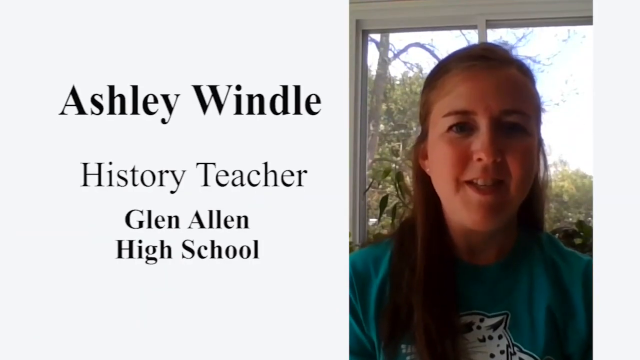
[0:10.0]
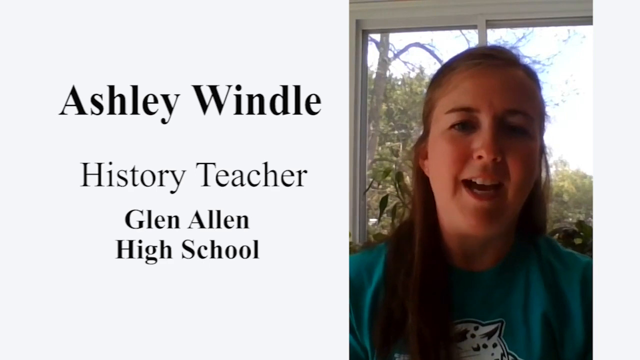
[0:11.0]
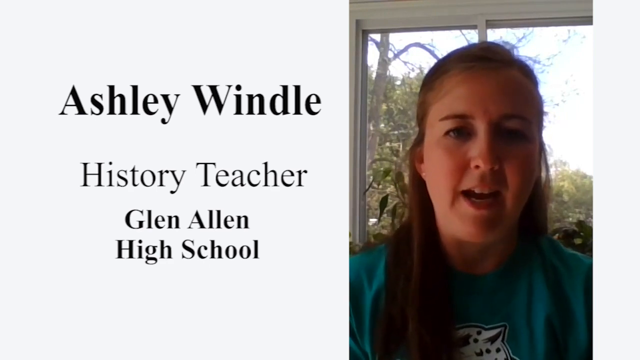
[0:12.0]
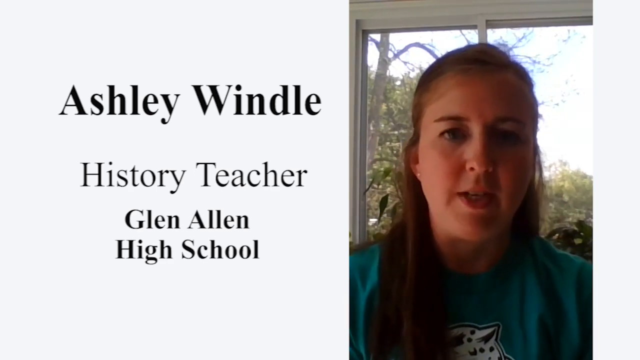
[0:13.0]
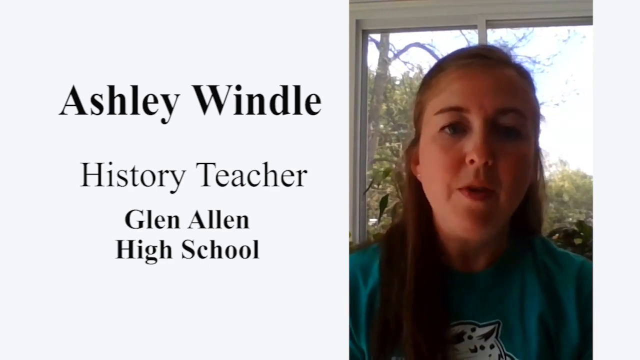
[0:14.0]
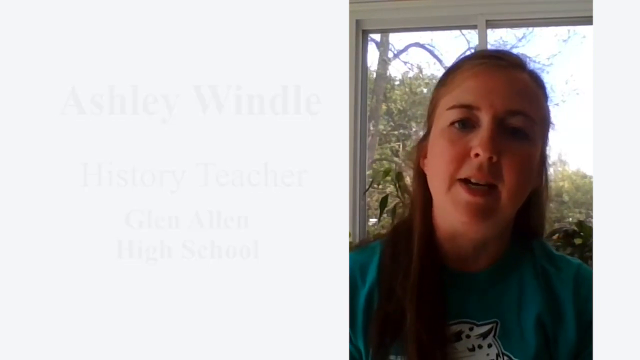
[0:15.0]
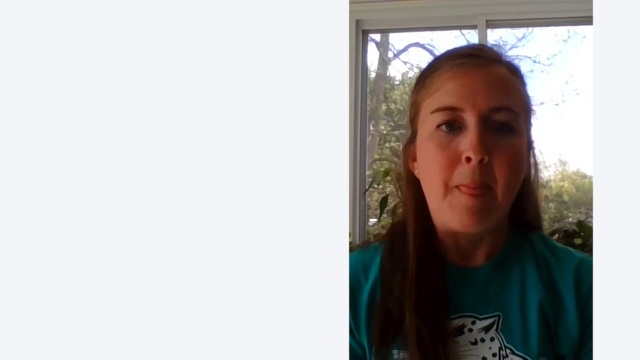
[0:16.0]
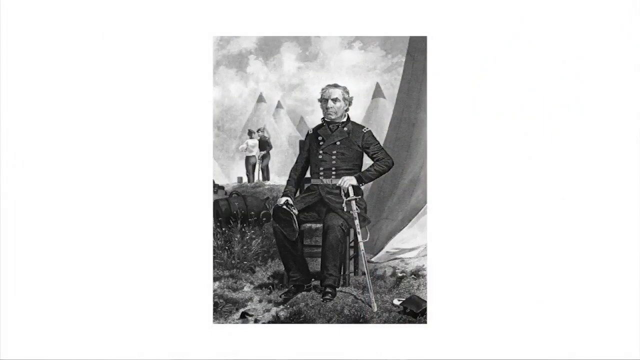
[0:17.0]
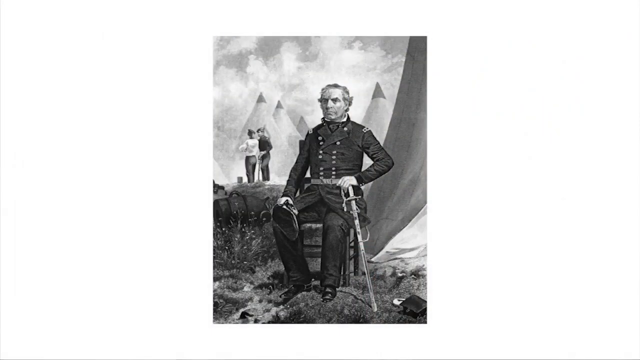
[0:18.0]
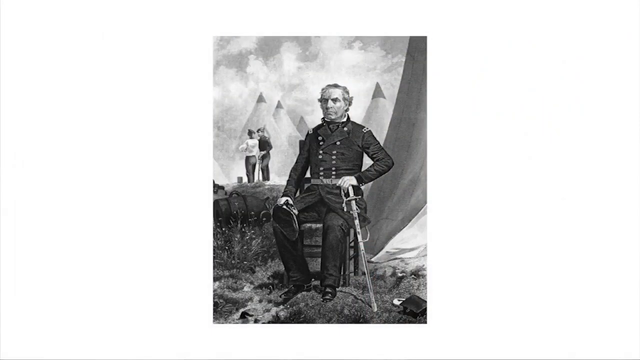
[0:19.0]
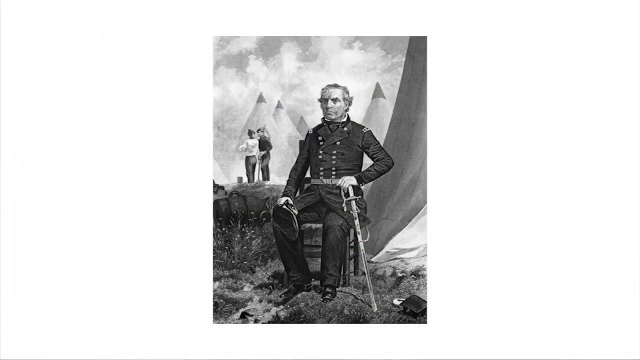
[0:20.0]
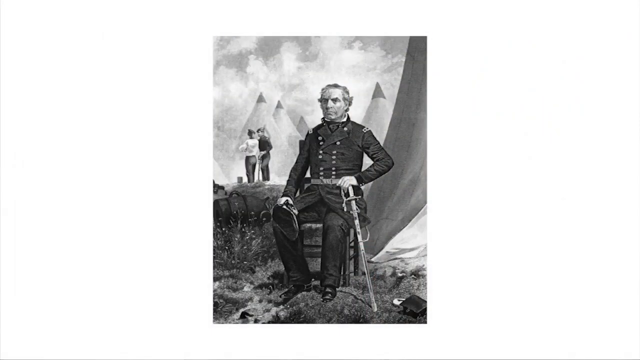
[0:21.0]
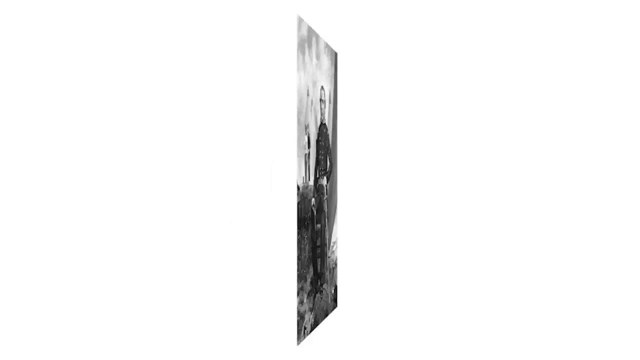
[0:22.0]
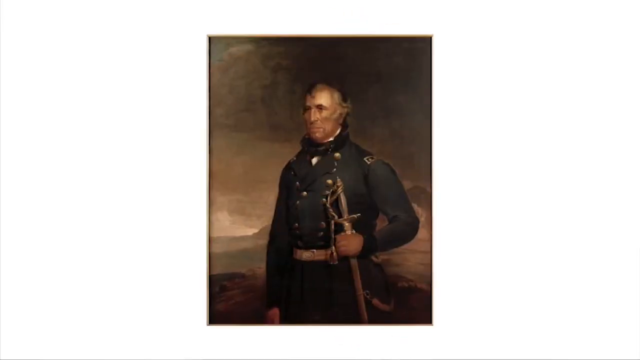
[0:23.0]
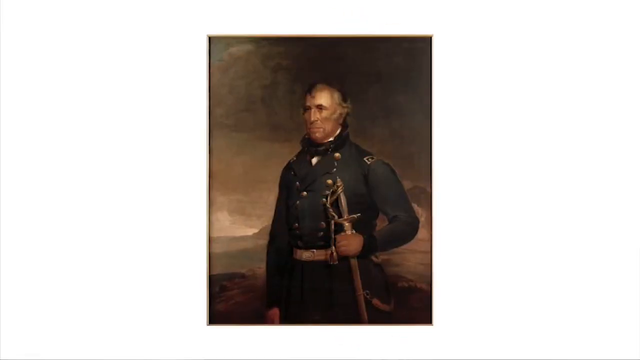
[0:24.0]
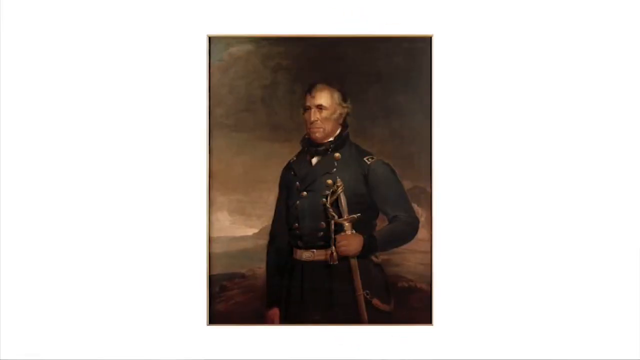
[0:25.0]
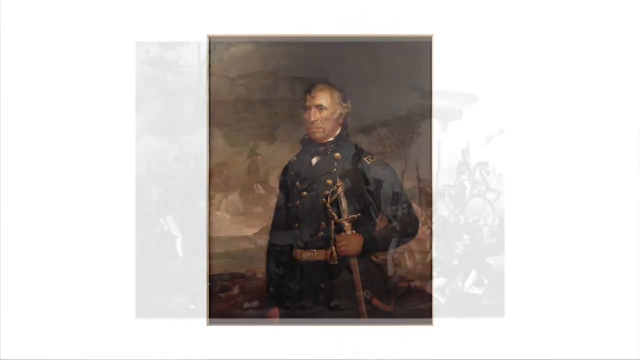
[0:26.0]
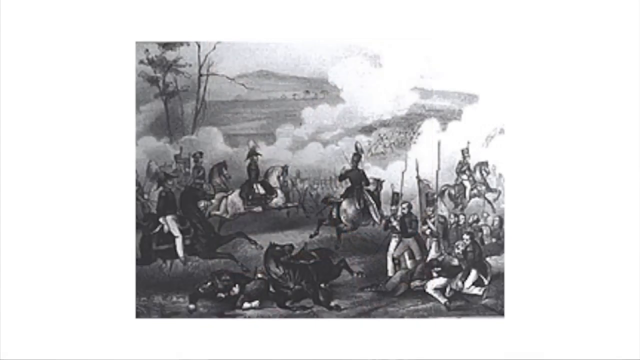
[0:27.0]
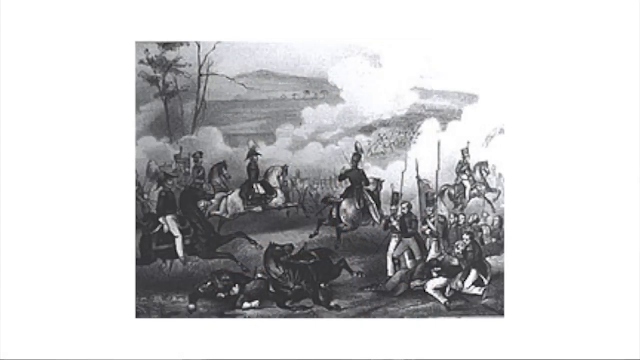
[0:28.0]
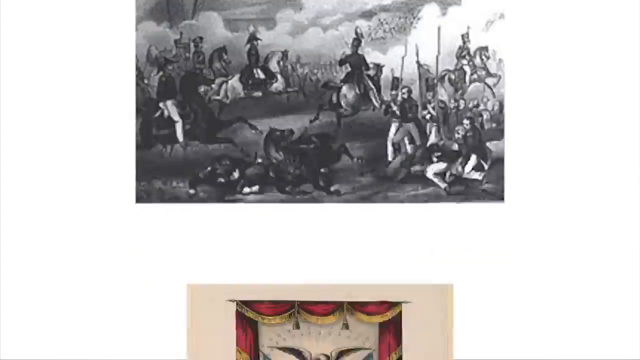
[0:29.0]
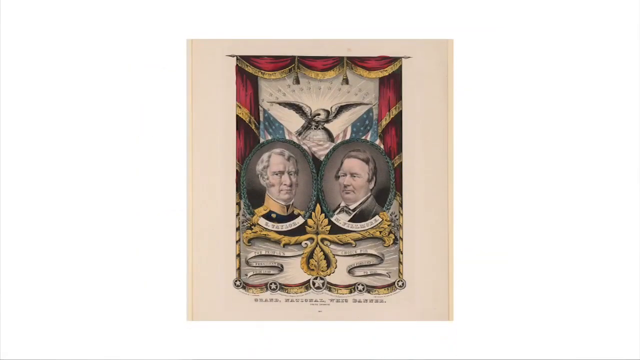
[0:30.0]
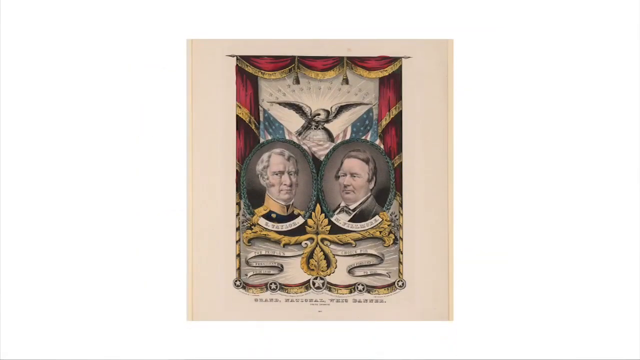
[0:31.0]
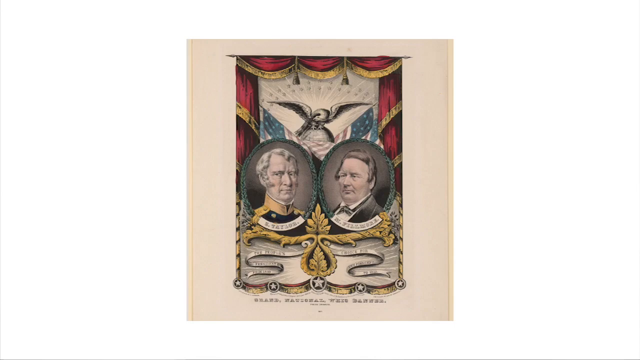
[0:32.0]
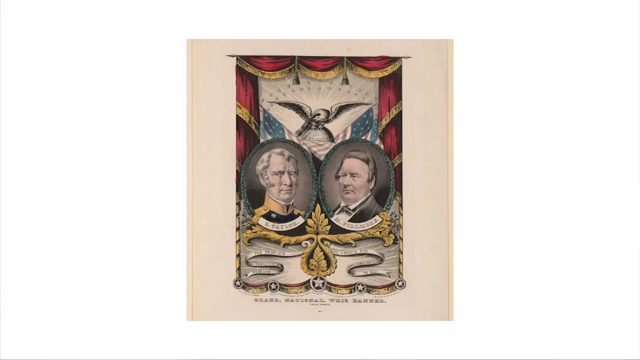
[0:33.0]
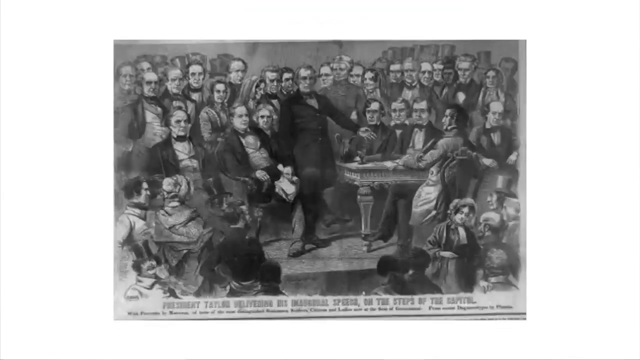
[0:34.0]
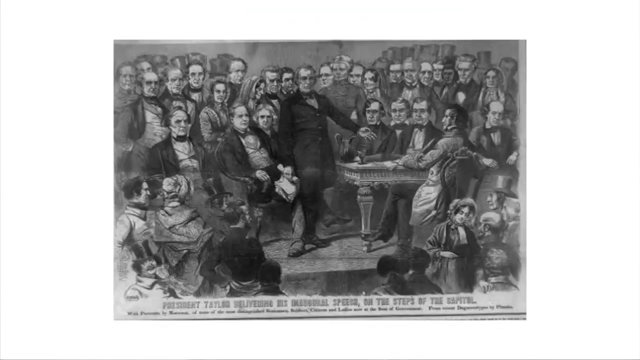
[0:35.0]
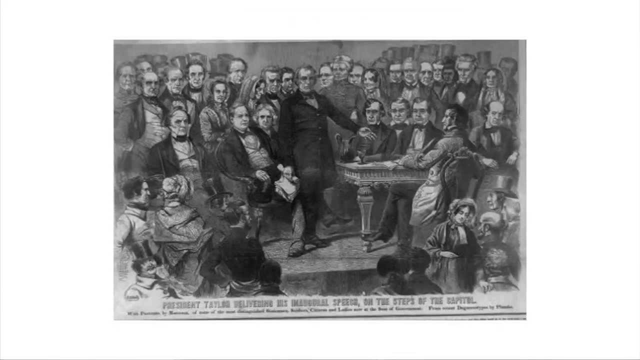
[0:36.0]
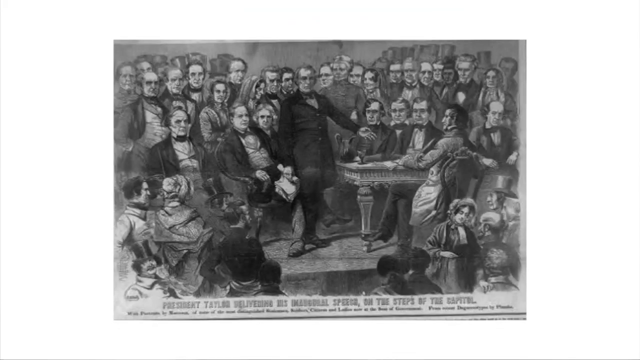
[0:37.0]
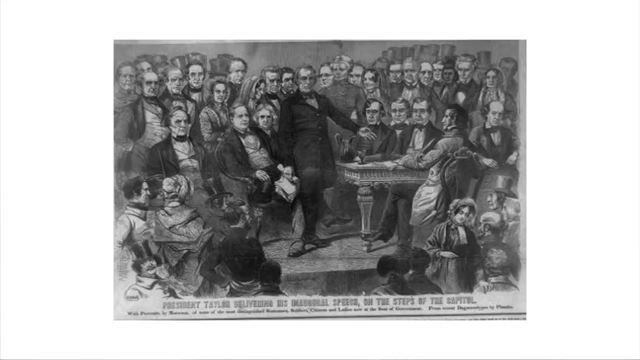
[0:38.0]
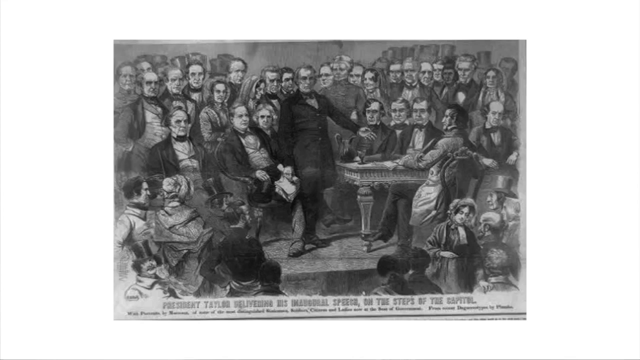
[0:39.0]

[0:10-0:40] On the right side of the screen, a woman wearing a turquoise green shirt talks to the camera. Behind her is a window, and trees are visible through it in the background. The screen is divided: the left side has a white background that fades into gray and black toward the bottom, with black text that says "Ashley Windle, history teacher, Glen Allen High School." She continues talking to the camera, and her sweater seems to have a graphic that looks like a dalmatian. The video then cuts to a black-and-white picture of a man wearing a uniform, sitting in a chair with a sword on his left side, which he holds with his left hand.